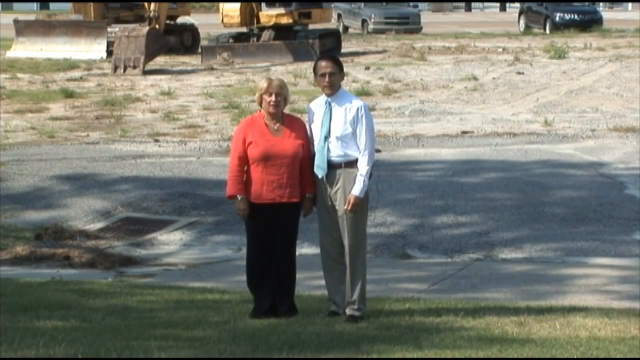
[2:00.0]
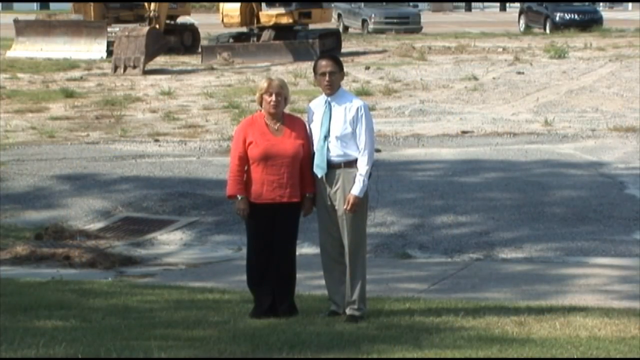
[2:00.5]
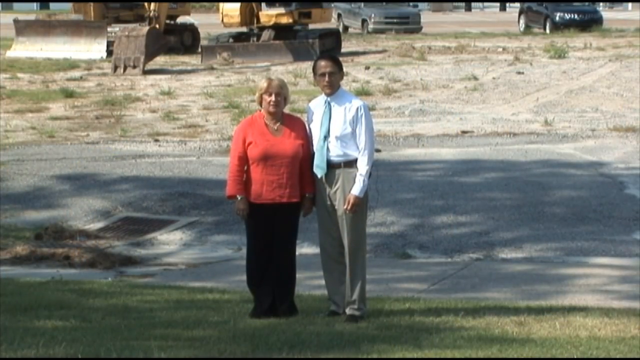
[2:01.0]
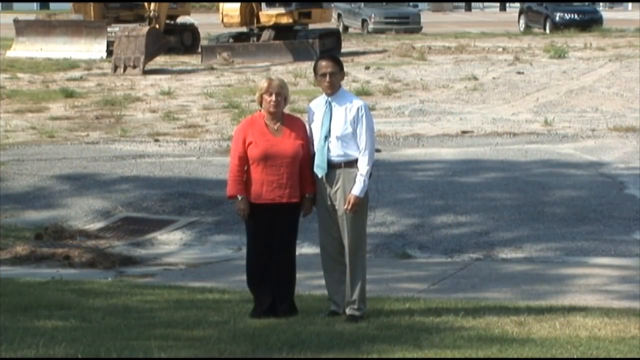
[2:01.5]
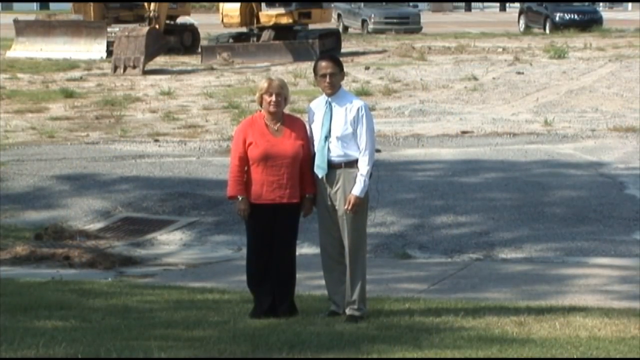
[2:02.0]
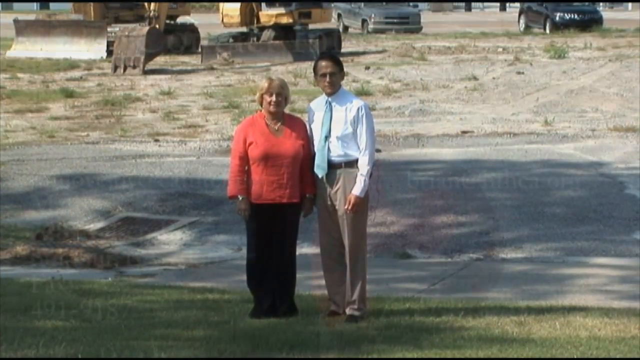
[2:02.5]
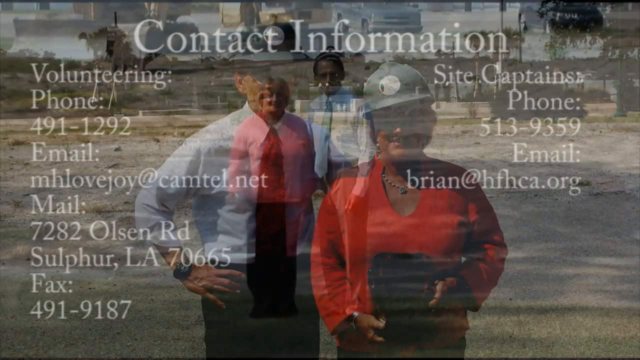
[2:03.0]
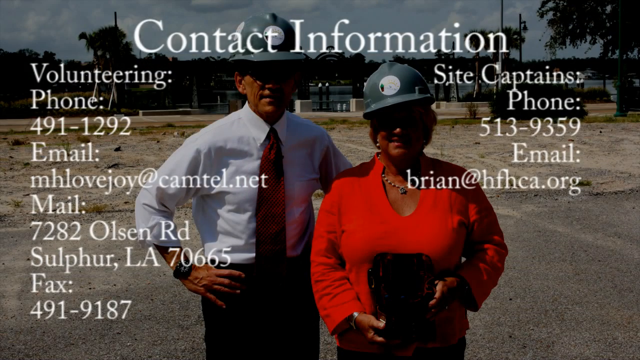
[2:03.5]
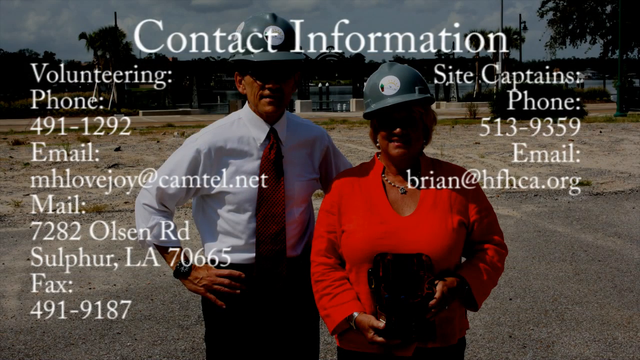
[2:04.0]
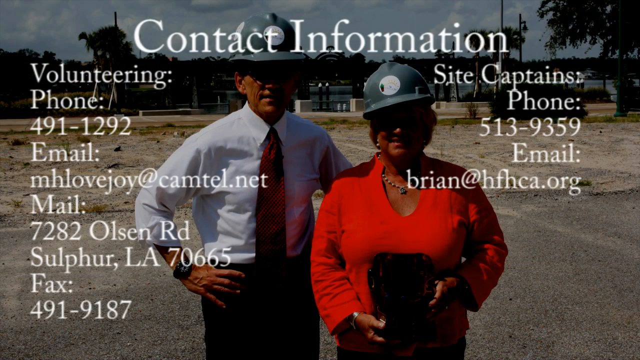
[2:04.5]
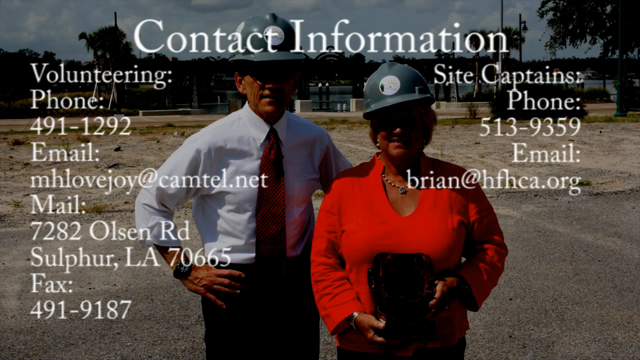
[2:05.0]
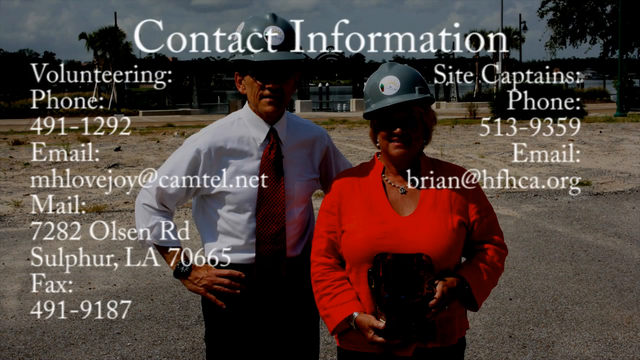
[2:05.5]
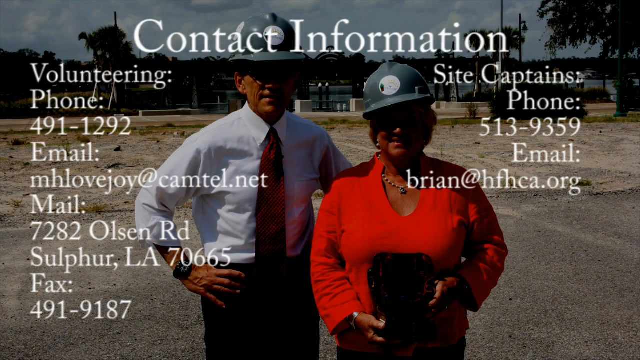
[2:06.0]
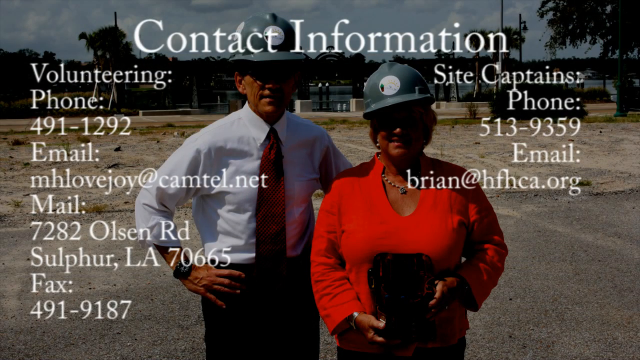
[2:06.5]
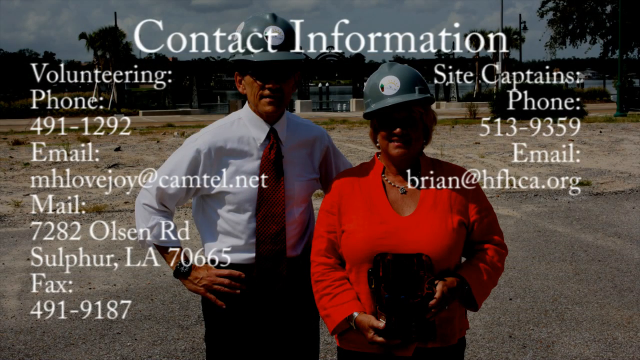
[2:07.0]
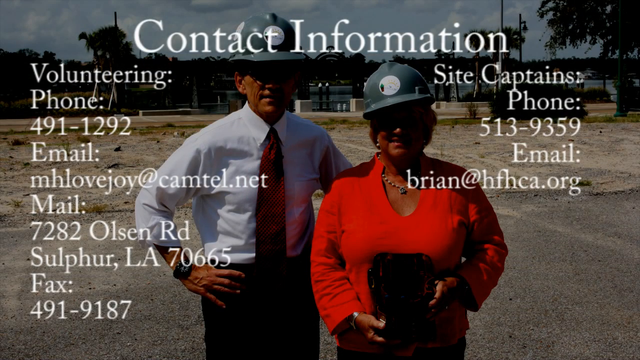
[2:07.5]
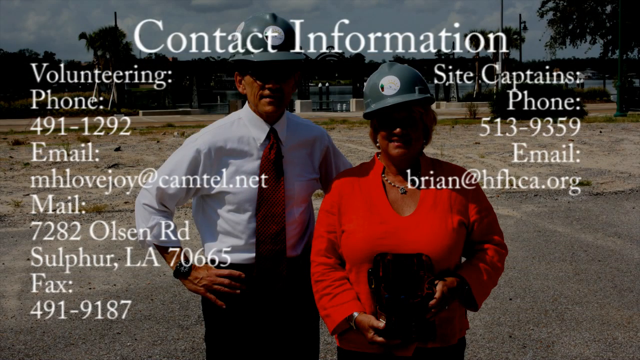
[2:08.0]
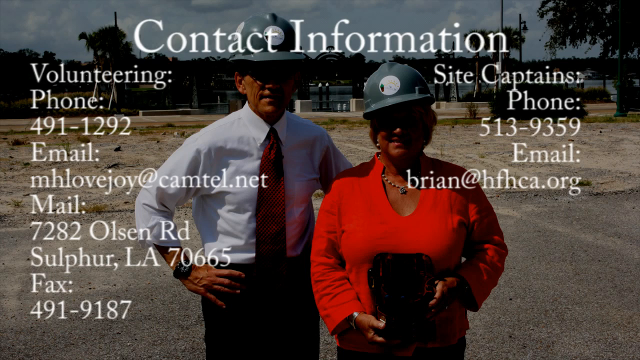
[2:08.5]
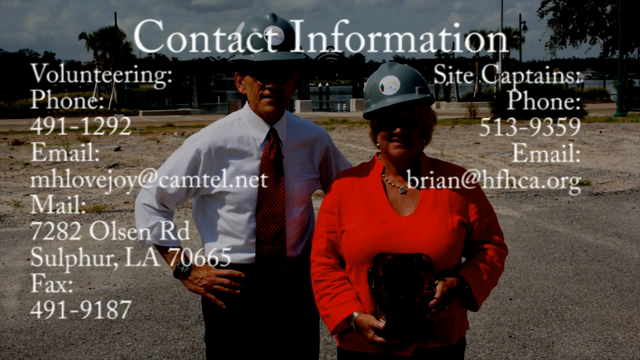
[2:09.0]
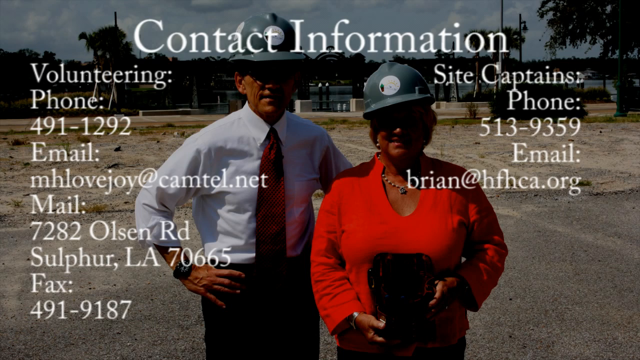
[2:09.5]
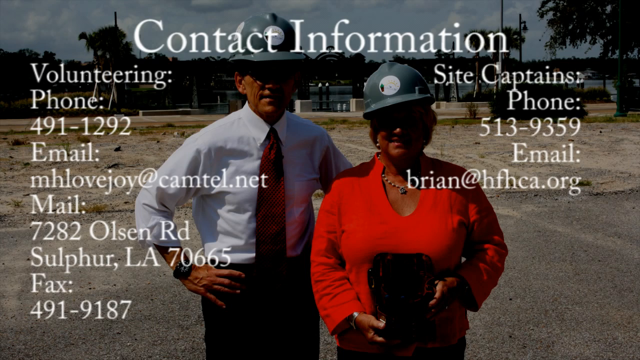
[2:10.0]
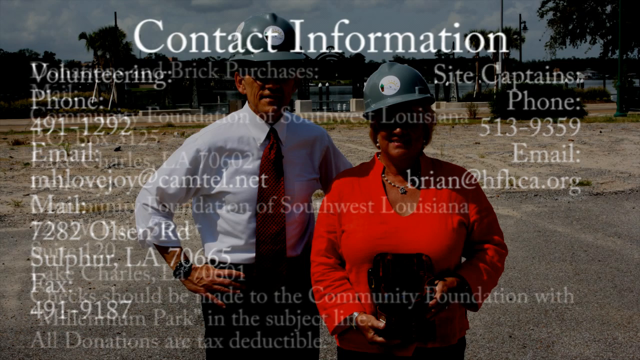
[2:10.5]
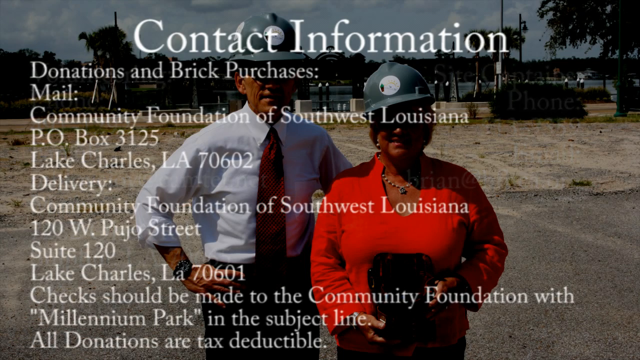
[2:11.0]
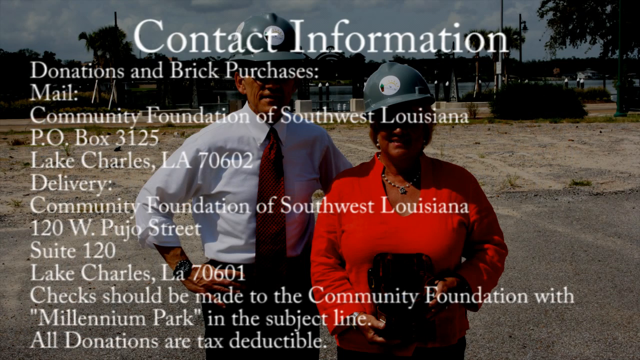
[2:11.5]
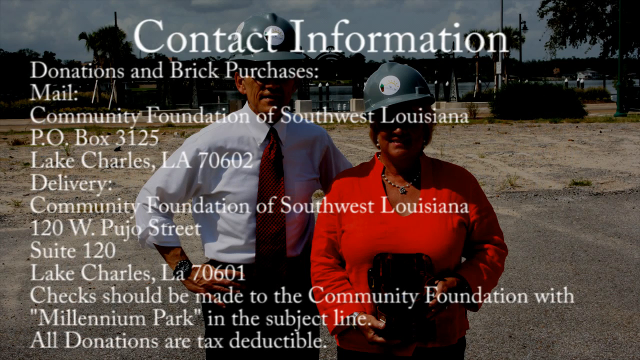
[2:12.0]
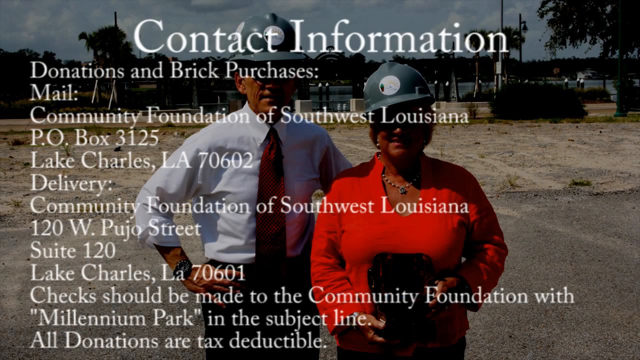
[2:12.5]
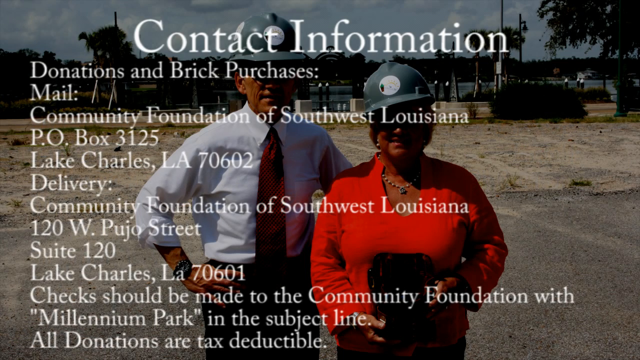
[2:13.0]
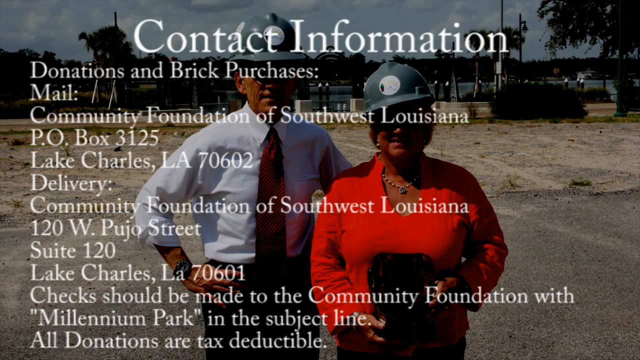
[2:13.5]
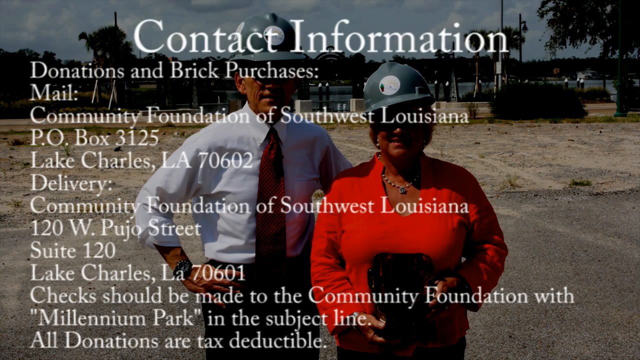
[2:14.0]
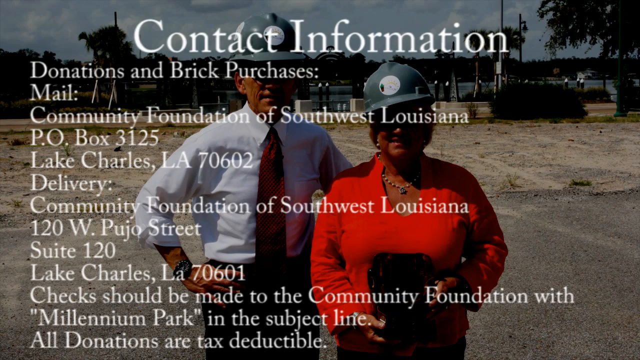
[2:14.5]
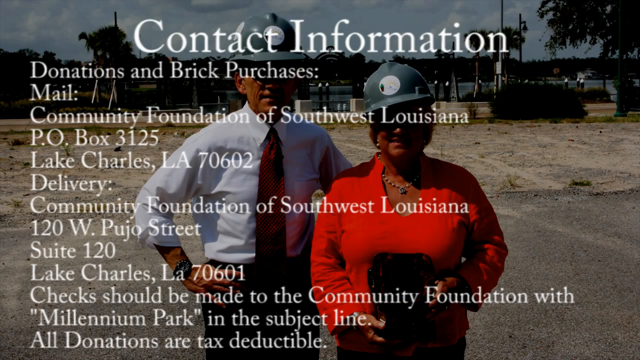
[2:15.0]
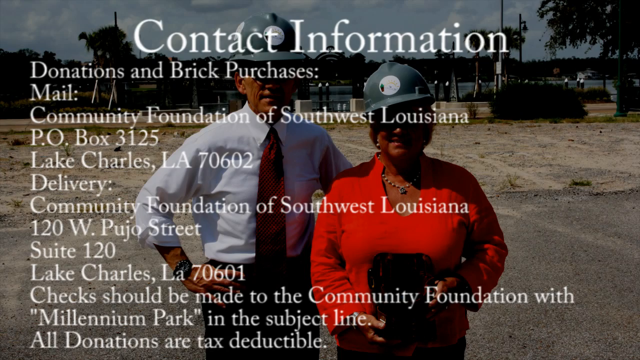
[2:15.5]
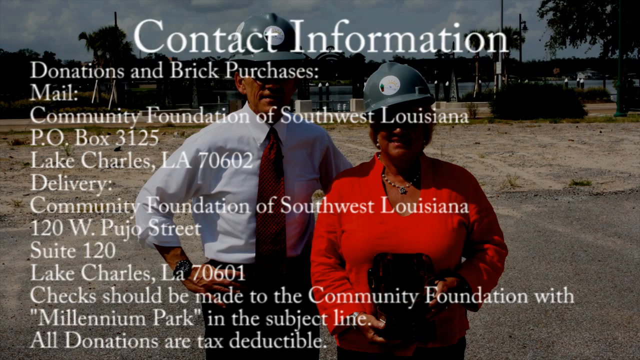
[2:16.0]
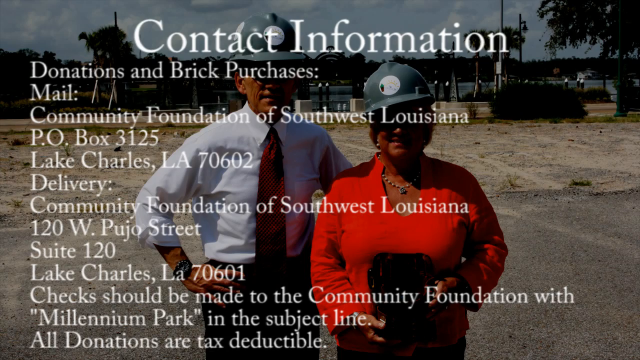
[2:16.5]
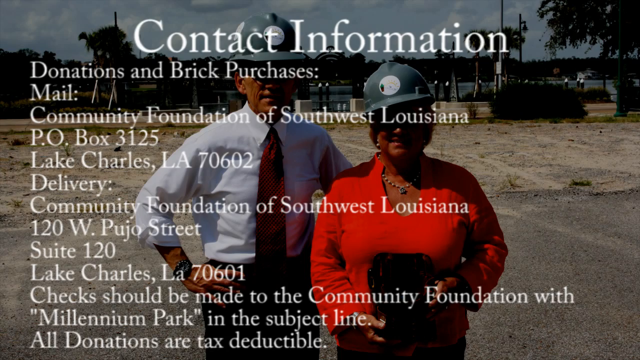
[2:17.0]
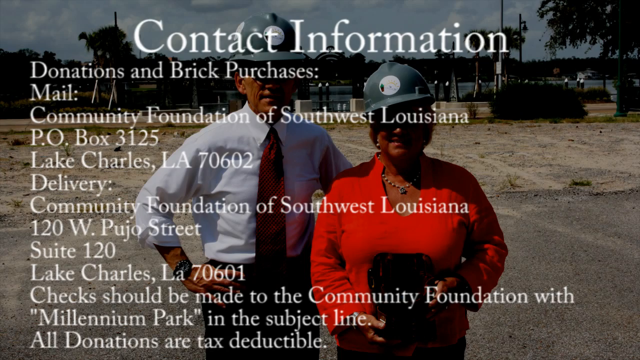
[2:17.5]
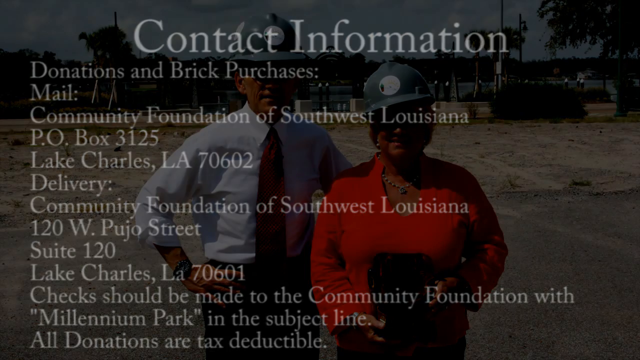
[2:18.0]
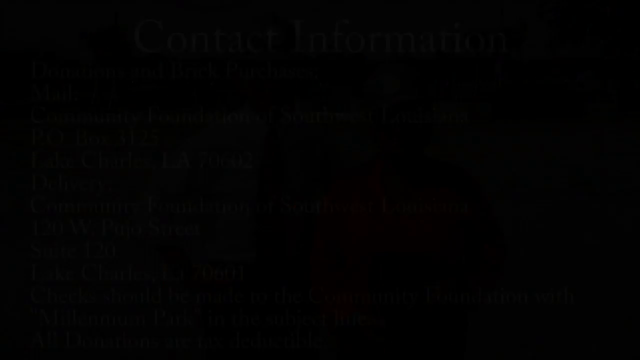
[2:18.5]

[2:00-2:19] A couple talks. Contact information is shown for site captains, volunteering phone numbers, donations and purchases. A Facebook page appears, showing memories and earlier activities, followed by pictures. The couple hugs and continues talking, and people are shown wearing working hats. Contact information about donations and purchasing is displayed, and then the screen goes black.